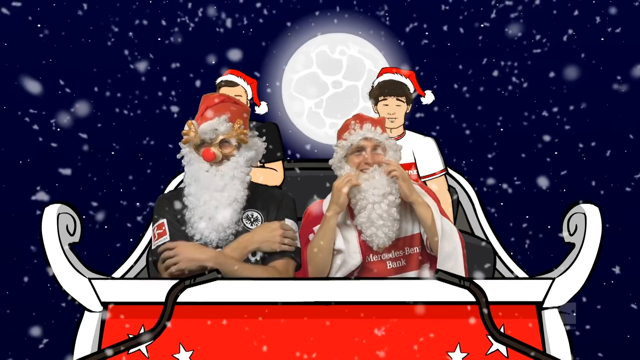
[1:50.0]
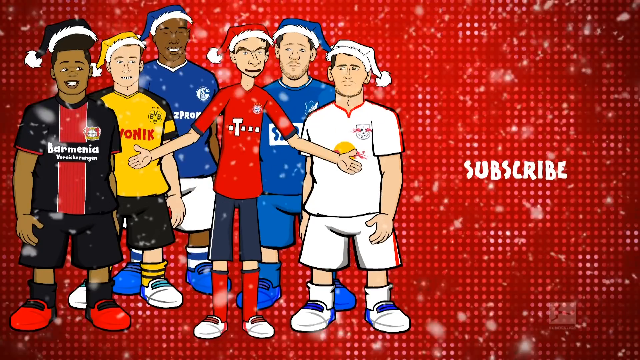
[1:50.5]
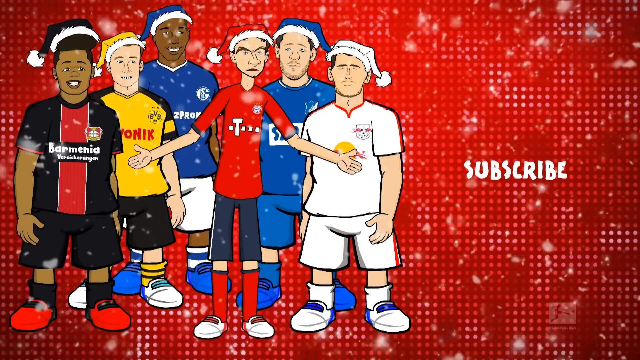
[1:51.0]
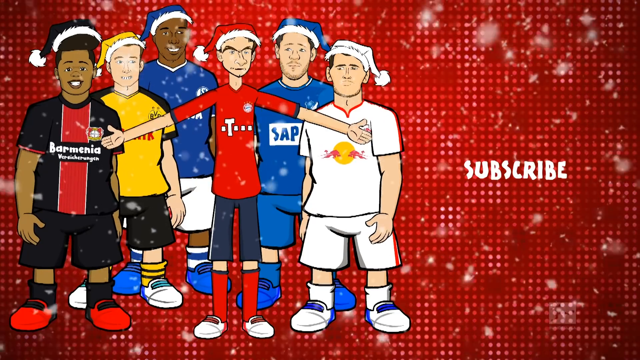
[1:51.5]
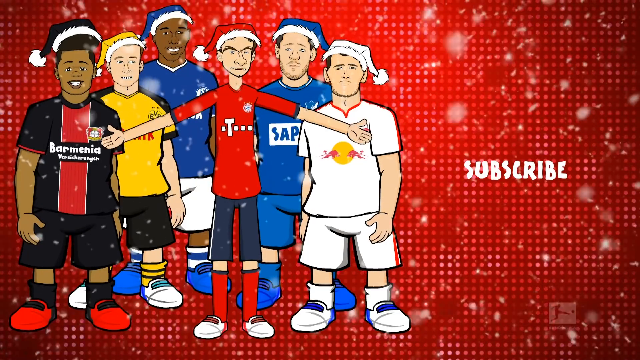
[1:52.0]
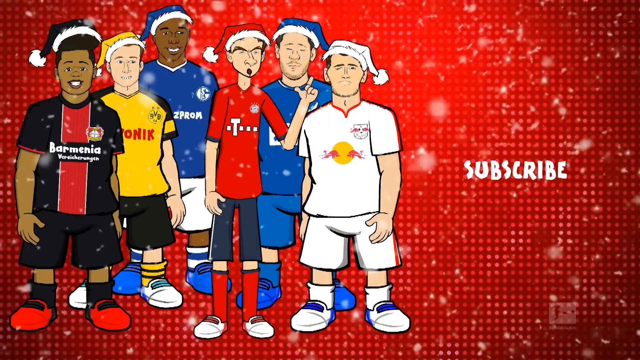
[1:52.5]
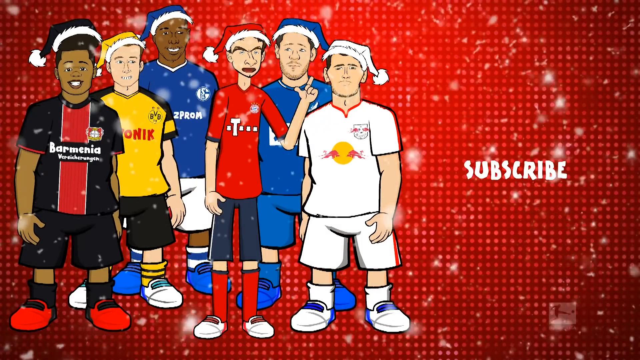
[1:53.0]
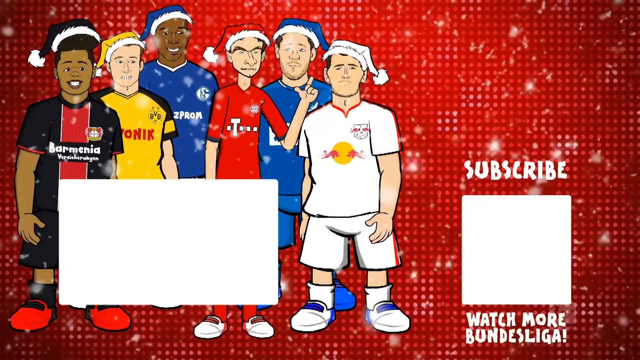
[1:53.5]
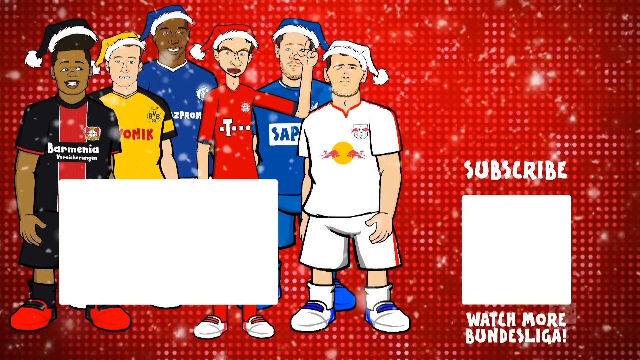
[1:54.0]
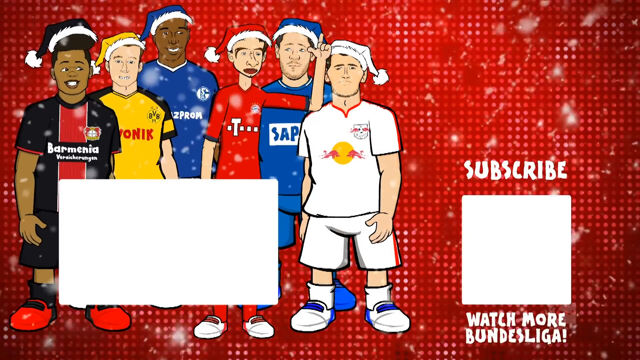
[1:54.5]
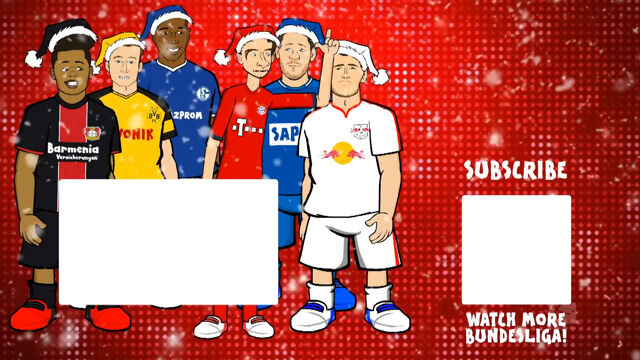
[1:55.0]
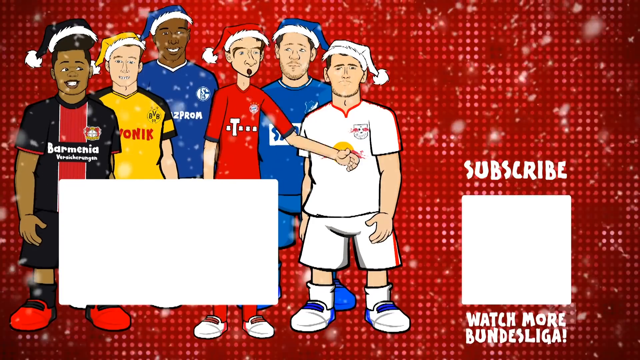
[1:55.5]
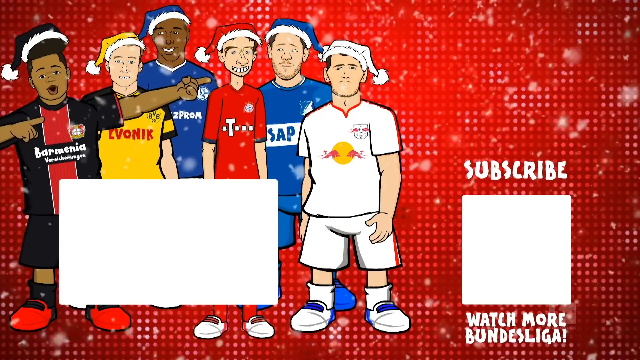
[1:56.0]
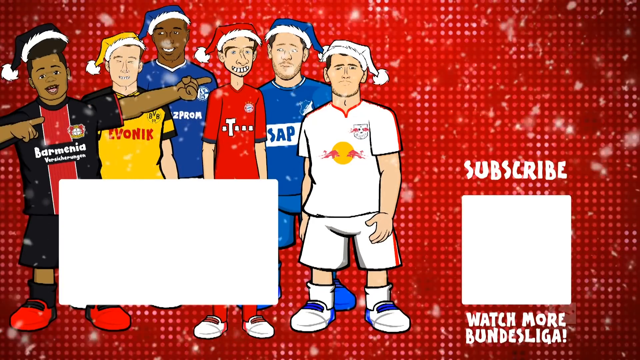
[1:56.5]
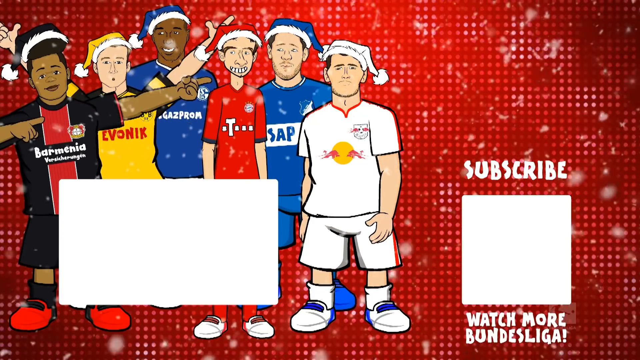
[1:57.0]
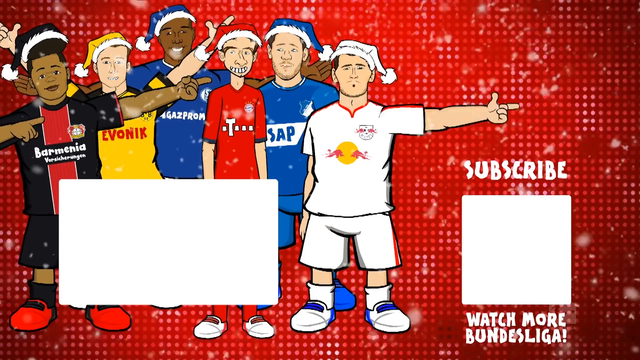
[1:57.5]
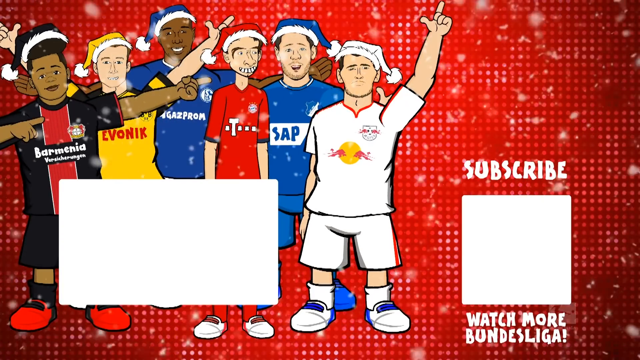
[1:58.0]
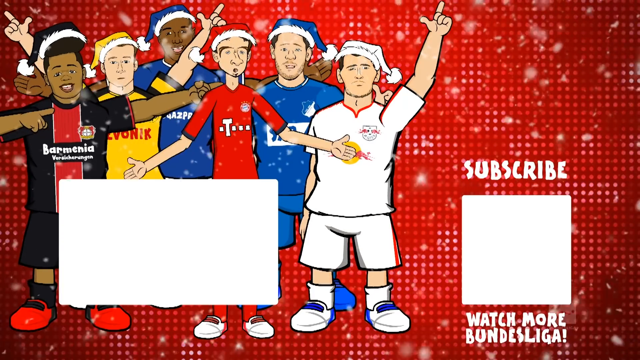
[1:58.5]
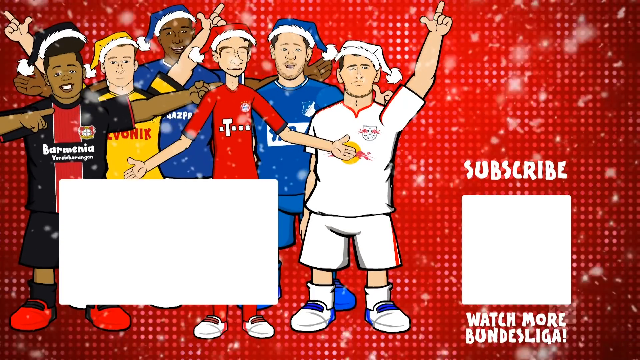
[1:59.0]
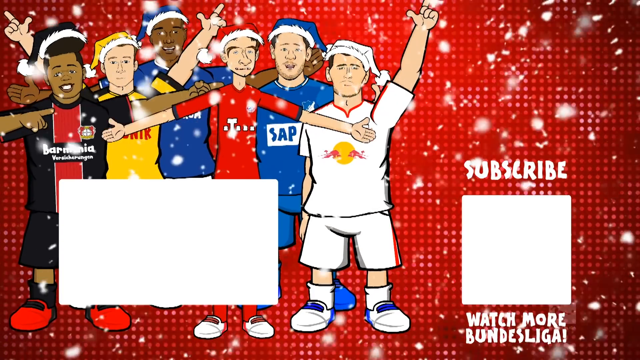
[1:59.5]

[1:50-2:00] Six animated players appear with the word "subscribe" and an image of a player kicking a ball, and the text reads "subscribe and watch more Bundeslinga". Two players wear blue jerseys and blue hats, one a yellow jersey and yellow hat reading "EVONIK", one a white jersey and white hat with a yellow sun with wings on it, and one a black and red striped jersey and black hat, the one from the very beginning. The one talking, whose mouth moves, is a very skinny man in a red jersey with a T on it and a red hat, the one with the buck teeth; he sings or says something, and it is mostly him the whole time. At the very end they all put their arms up, pointing their fingers and saying something, probably singing. The letters on the blue jerseys cannot be made out.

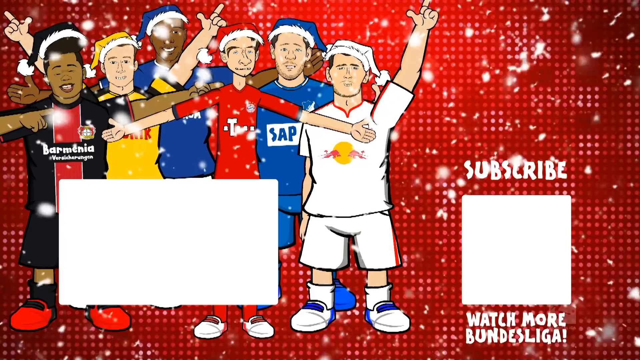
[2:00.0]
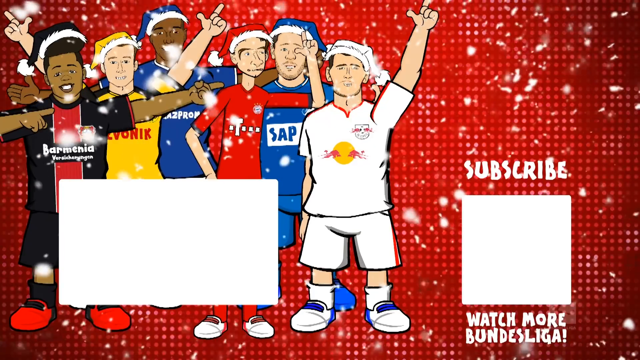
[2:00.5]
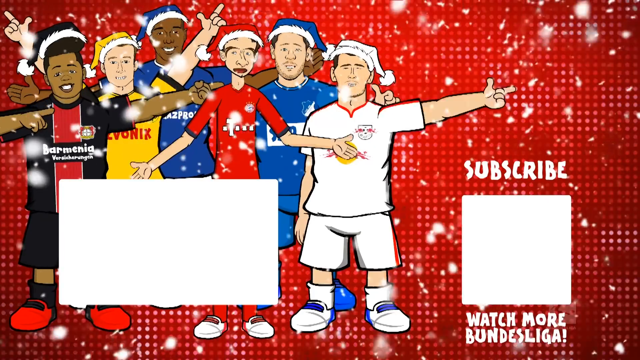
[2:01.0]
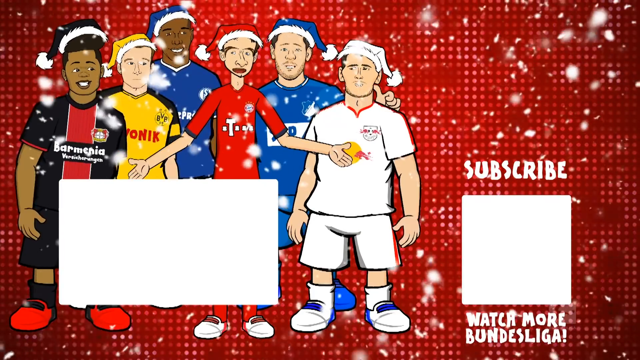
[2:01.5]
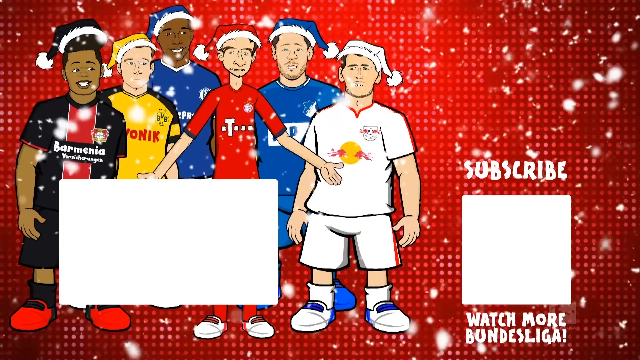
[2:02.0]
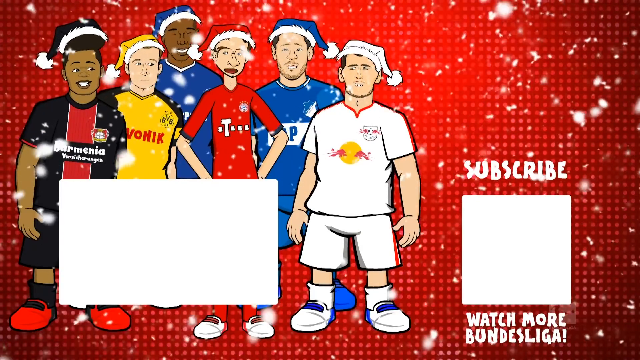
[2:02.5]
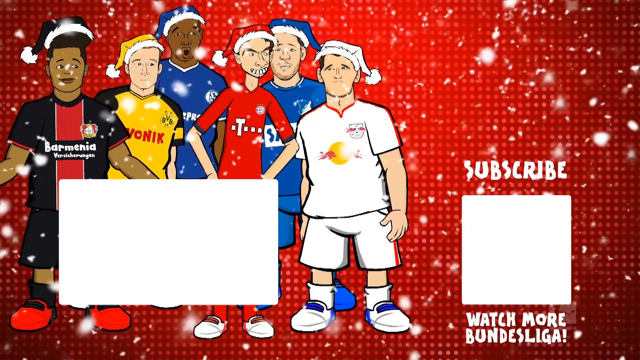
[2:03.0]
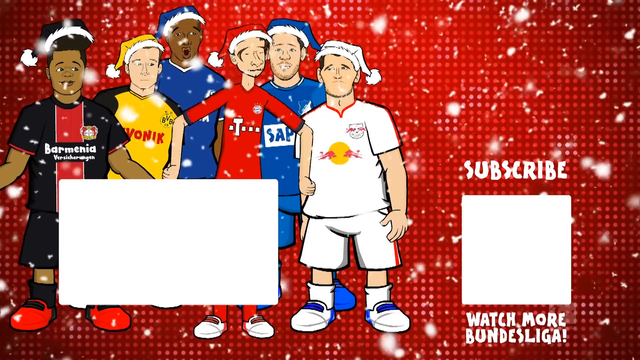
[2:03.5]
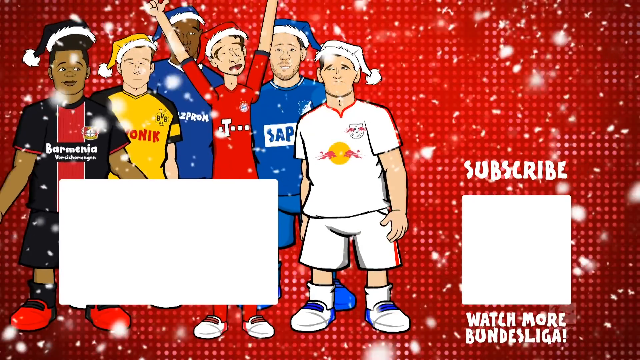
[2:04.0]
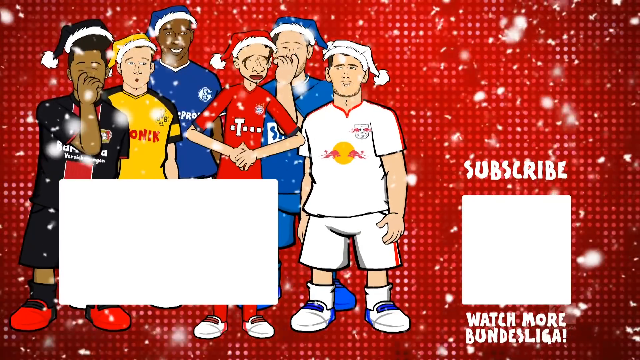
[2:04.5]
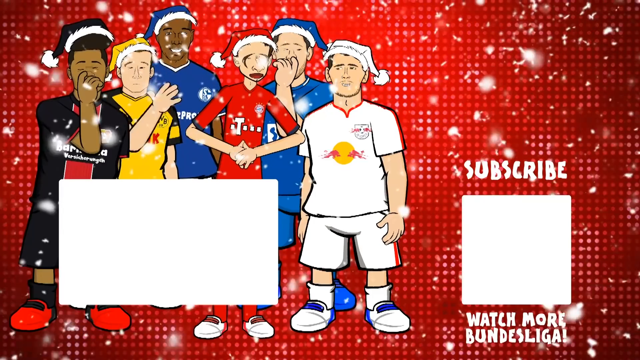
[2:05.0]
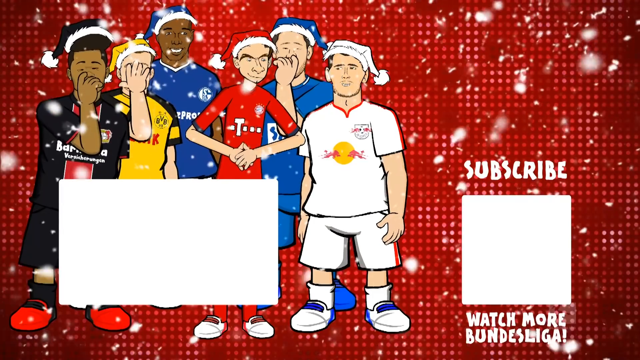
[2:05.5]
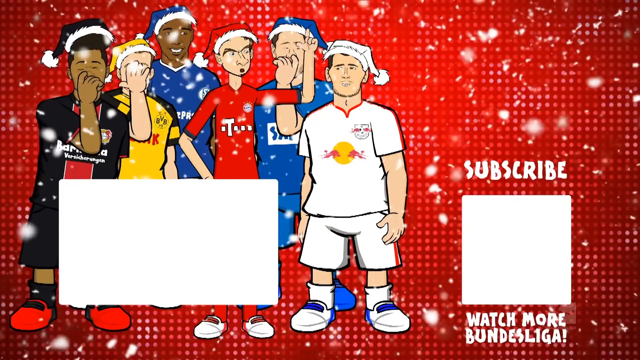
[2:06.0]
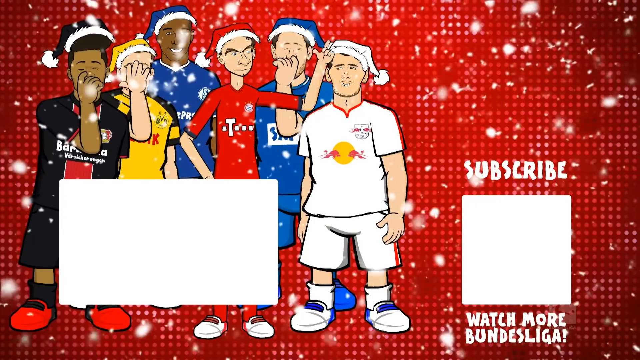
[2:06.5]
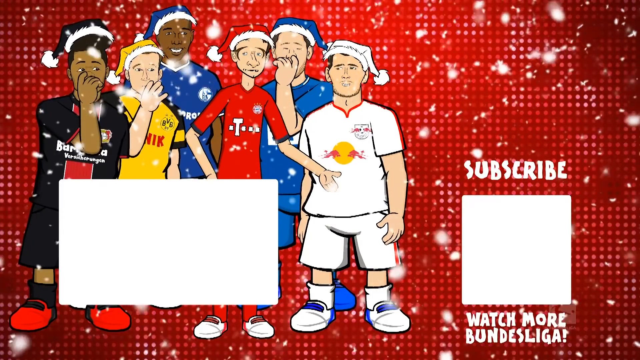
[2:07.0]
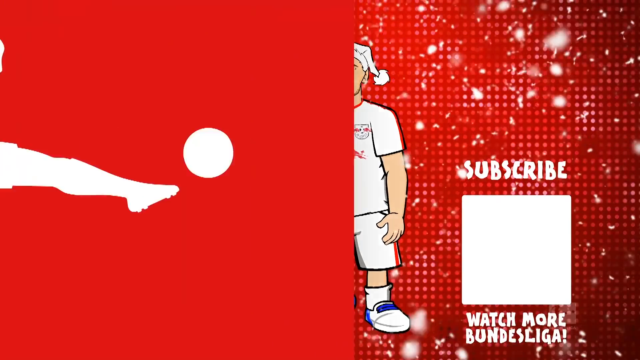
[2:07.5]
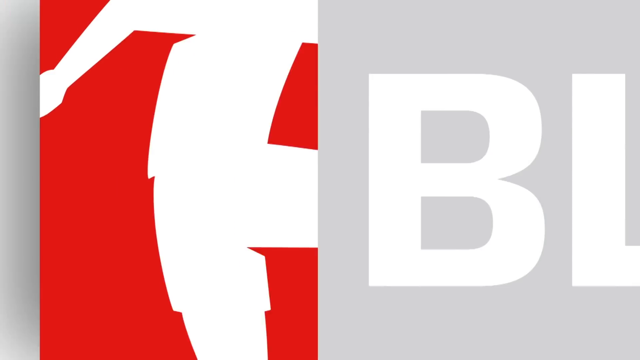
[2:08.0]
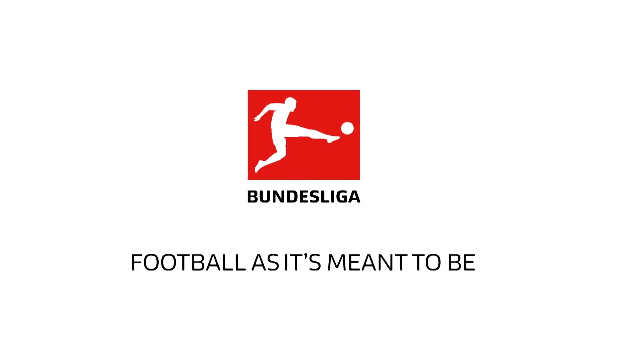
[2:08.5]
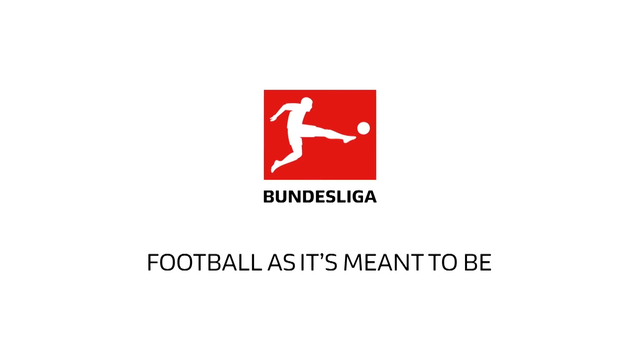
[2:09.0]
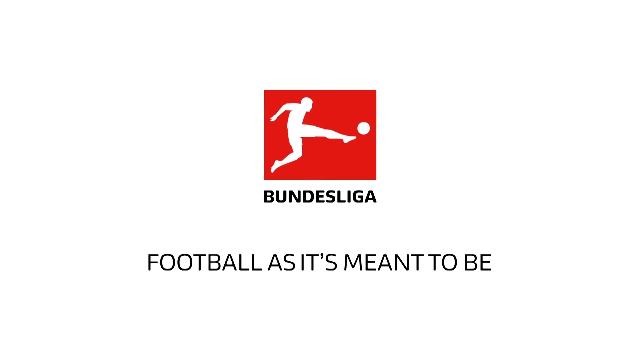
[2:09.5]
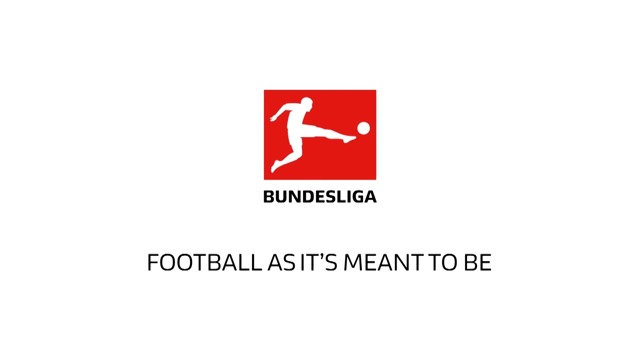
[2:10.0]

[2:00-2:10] The six animated characters have their hands up in the air. The skinny one is talking; he throws both hands straight up, then puts his hands on his belly and laughs very hard, possibly at a joke. The other men start to laugh and giggle too. The one in the blue jersey to his left, behind him, looks like he has his finger up his nose or possibly just his hand on his face as he laughs; the player in the black and red shirt has his hand the same way, and the player in the yellow jersey covers his face with his hand. An animation slides across the screen: a white silhouette of a player with his leg extended kicking a white soccer ball, with black lettering reading "football as it's meant to be".